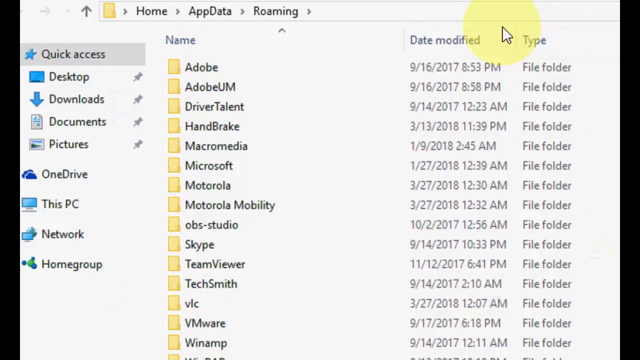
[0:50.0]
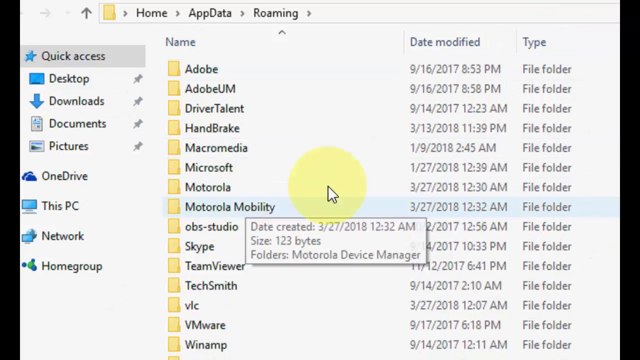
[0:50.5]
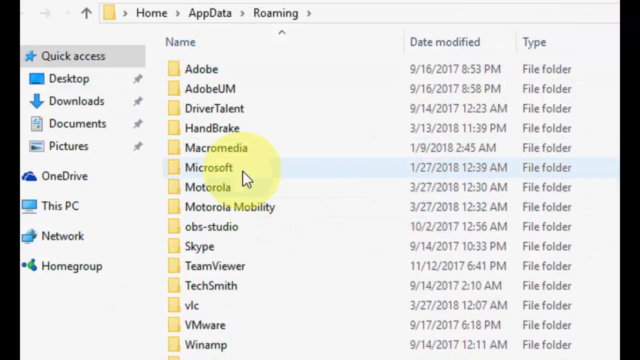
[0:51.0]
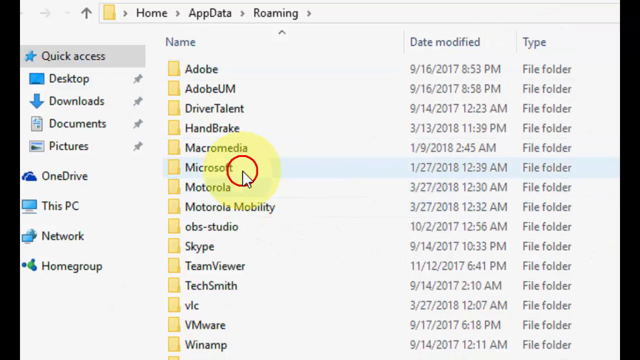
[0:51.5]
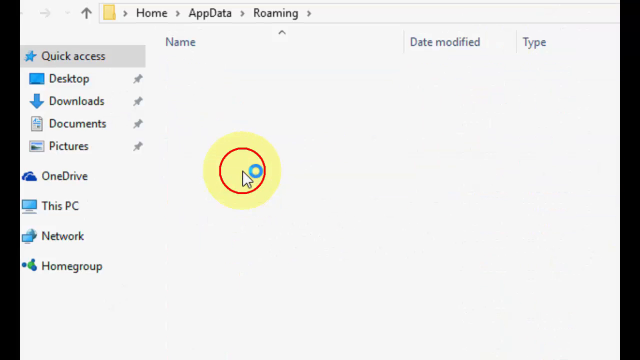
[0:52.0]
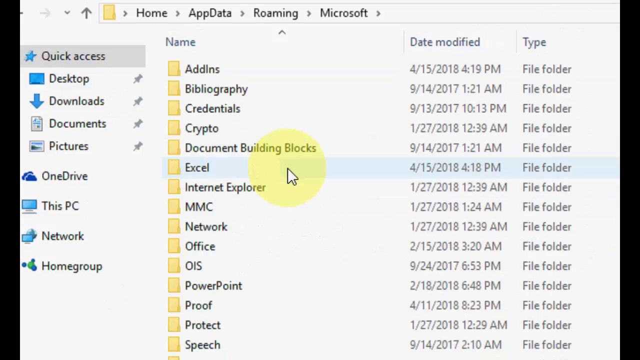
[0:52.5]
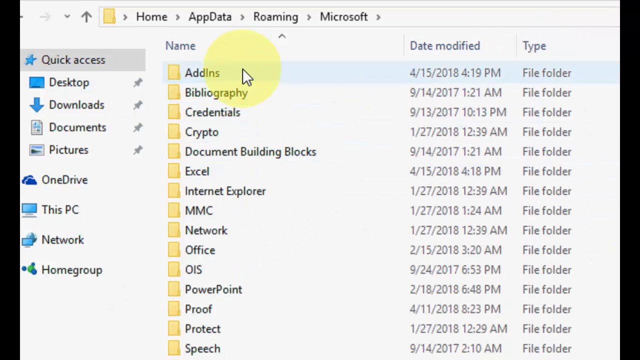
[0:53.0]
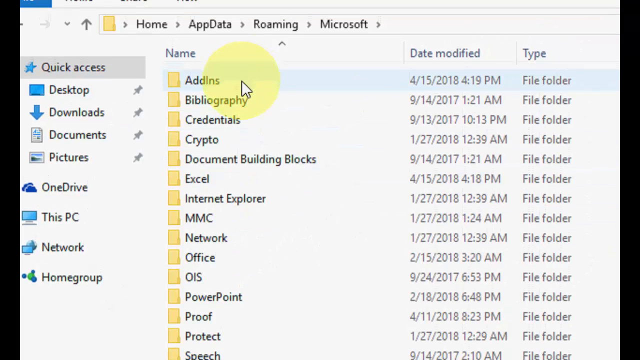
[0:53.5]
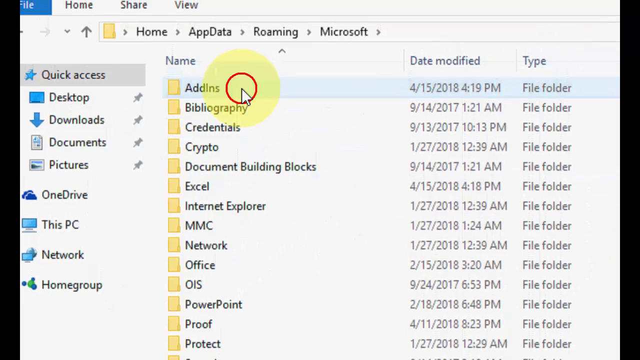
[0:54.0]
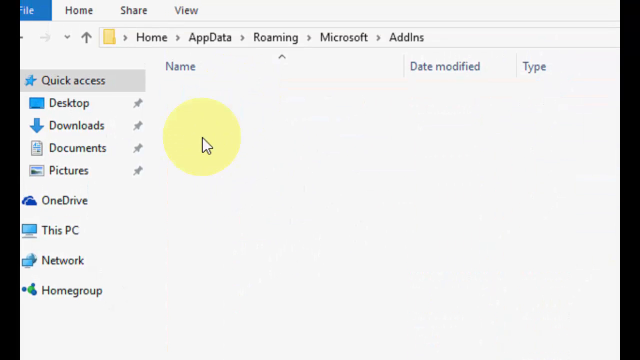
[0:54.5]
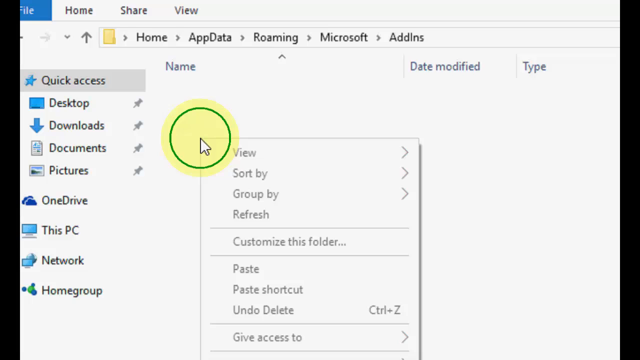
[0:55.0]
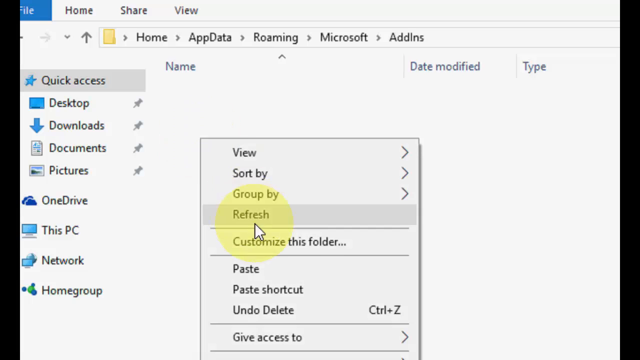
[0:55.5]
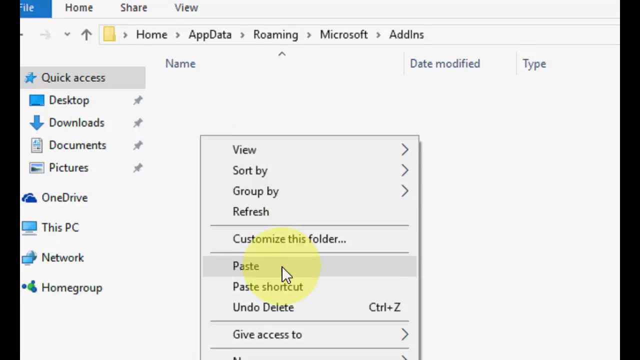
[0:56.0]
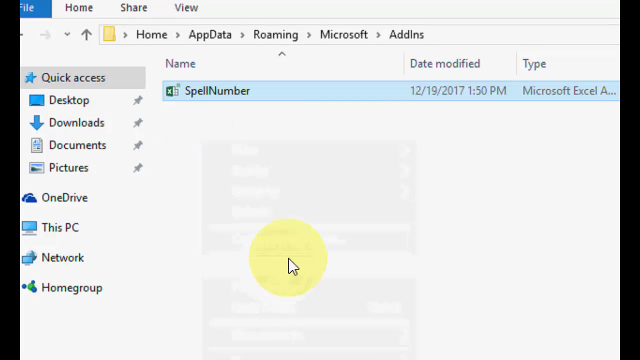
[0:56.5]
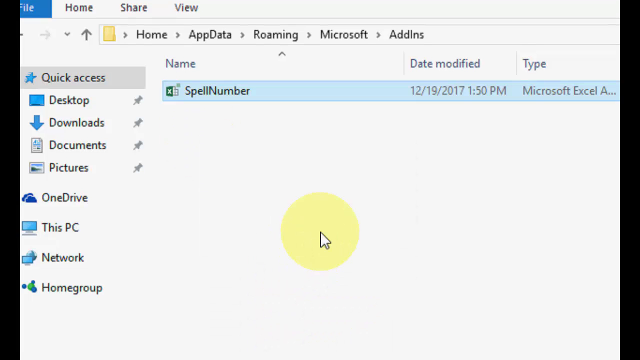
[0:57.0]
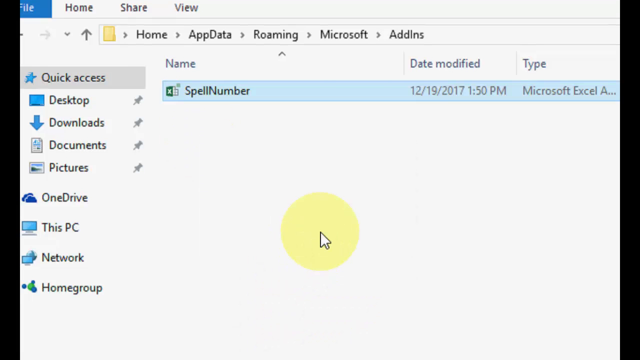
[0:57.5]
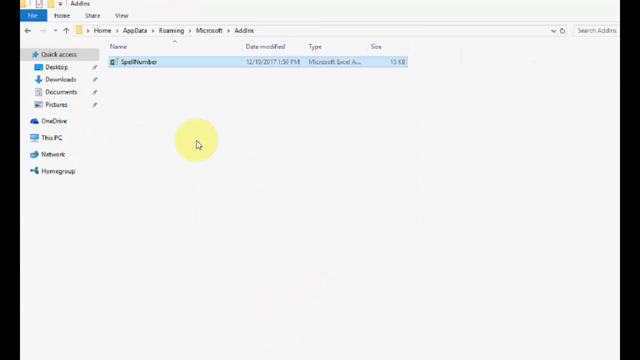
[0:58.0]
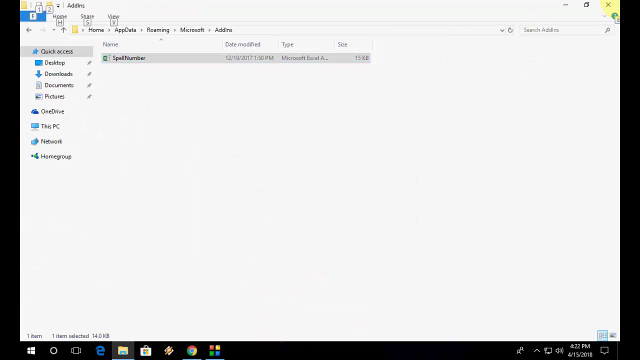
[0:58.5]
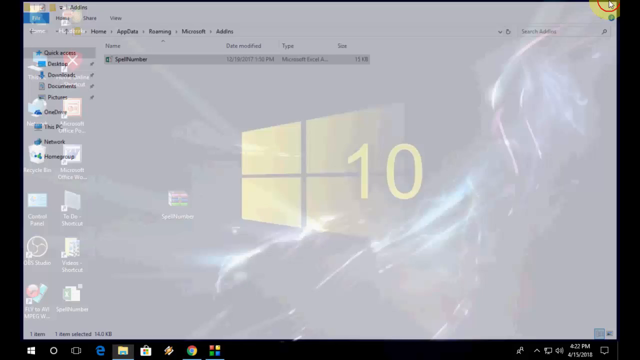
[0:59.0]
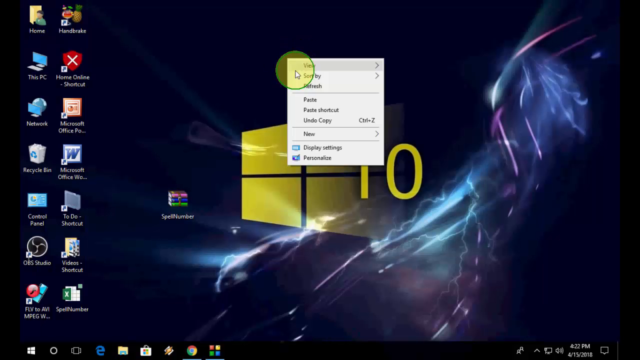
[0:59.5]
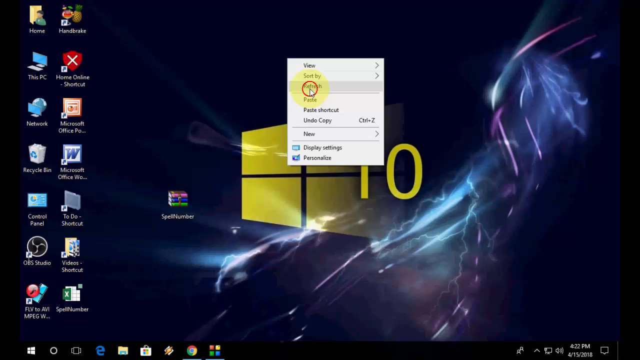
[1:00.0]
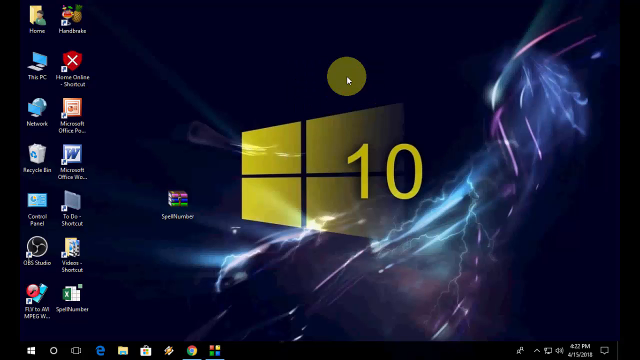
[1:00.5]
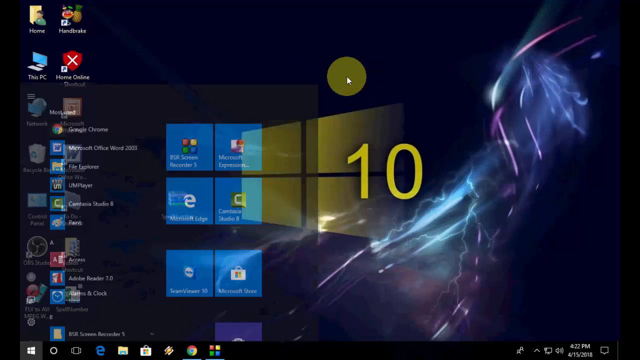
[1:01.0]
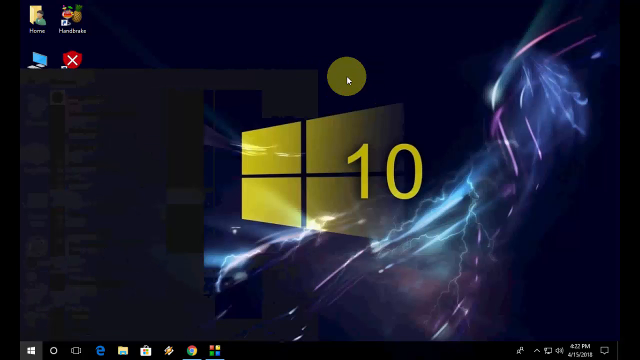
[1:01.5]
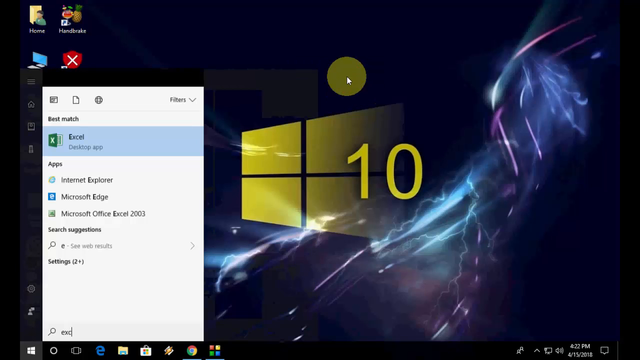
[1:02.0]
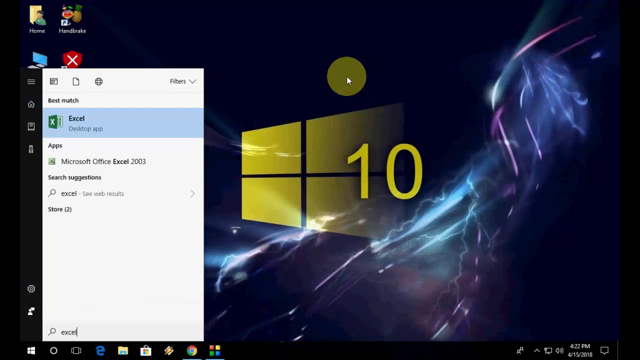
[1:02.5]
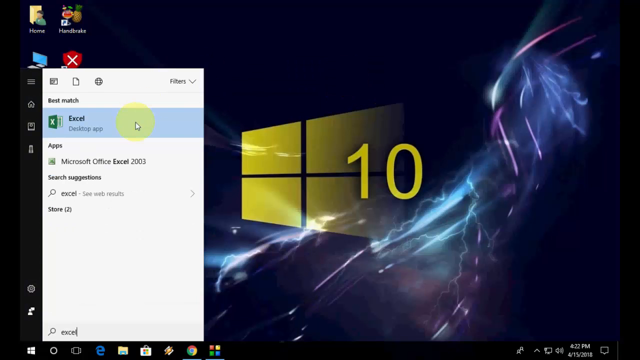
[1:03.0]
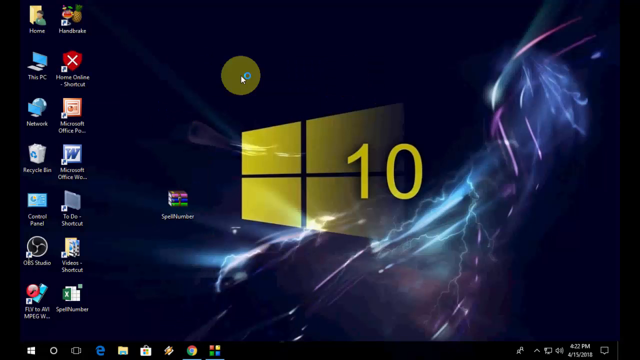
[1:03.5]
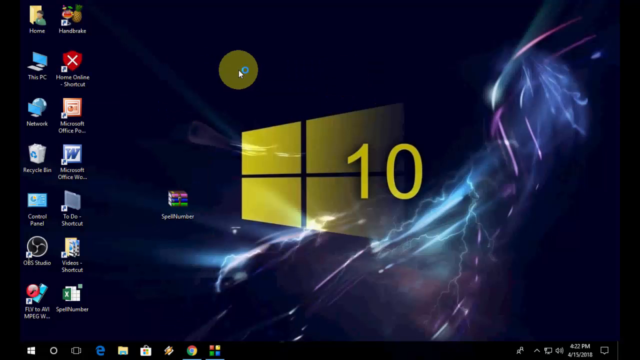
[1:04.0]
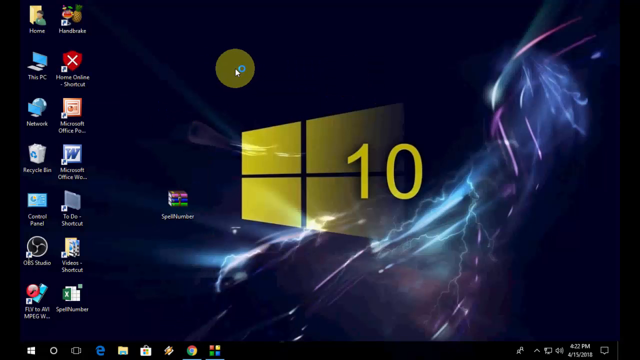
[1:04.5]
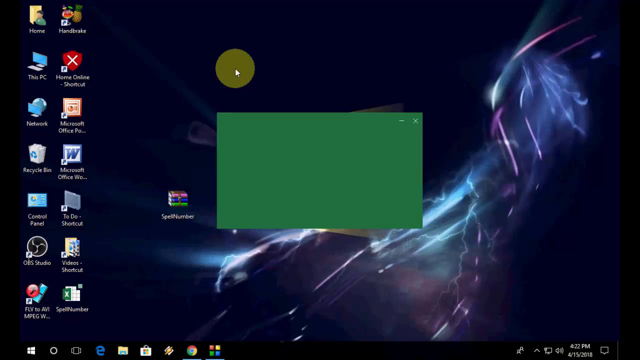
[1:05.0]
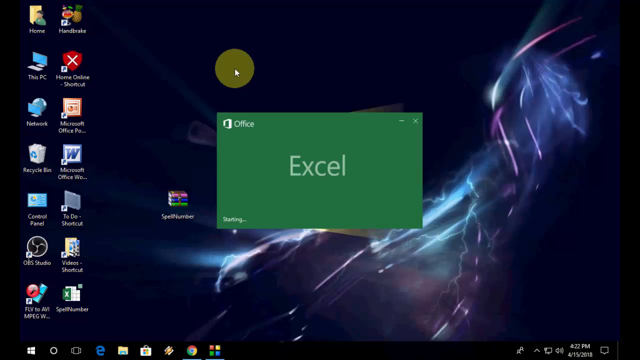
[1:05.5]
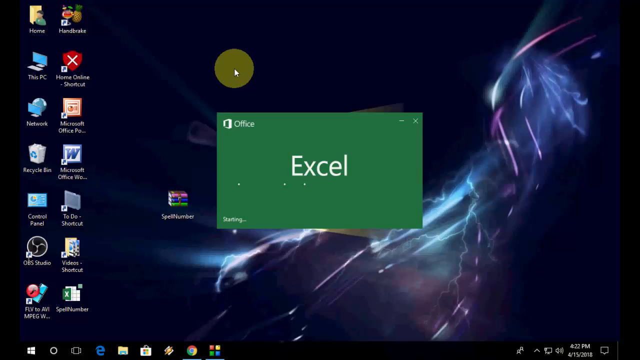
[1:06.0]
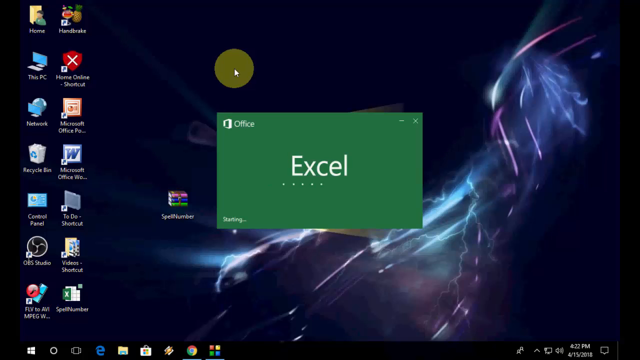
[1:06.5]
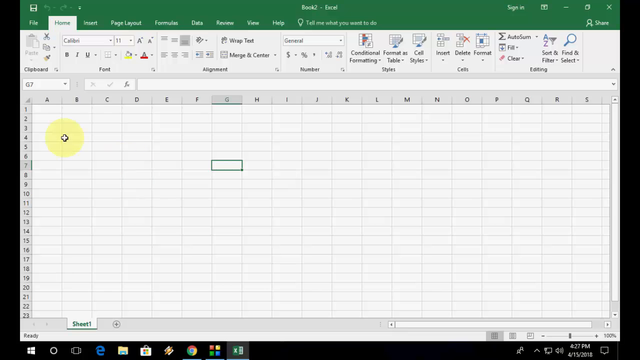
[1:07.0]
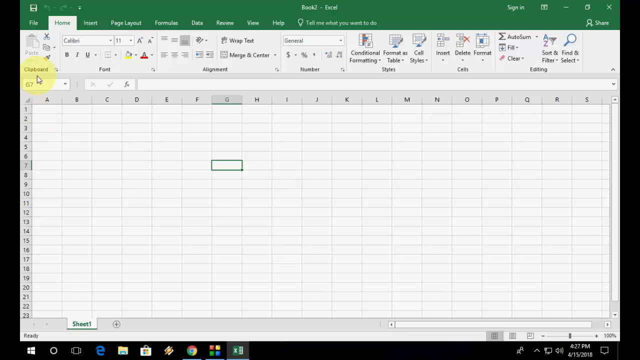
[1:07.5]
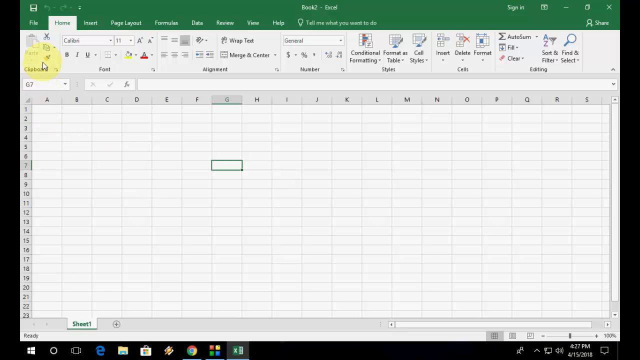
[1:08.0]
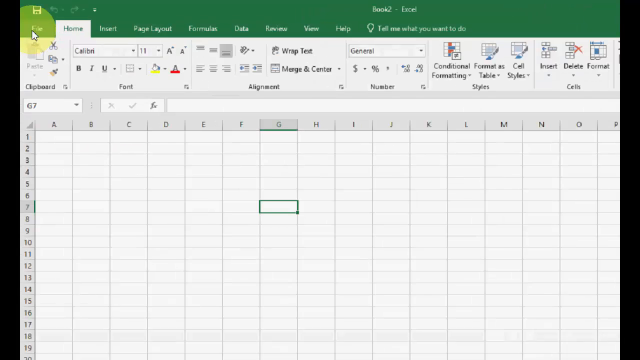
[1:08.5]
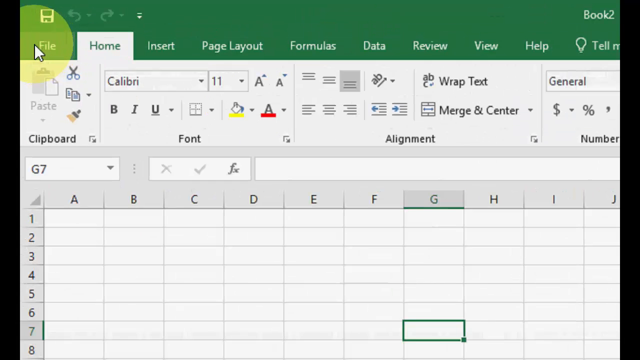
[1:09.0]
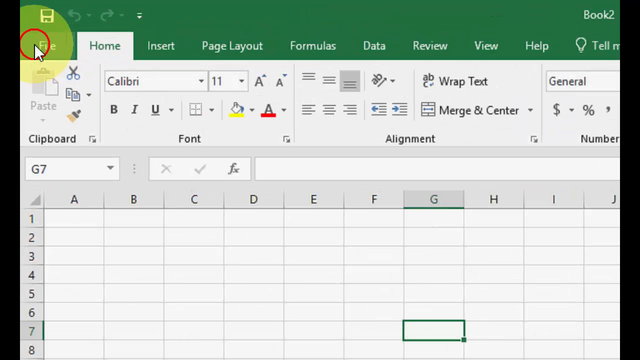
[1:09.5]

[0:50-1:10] Windows Explorer, a list of files, is on the right side, and the cursor highlights some of them. A red circle and a red line appear, and the files all disappear. The view scrolls to the very top file and add-ins is clicked. A pop-up window shows up with a yellow circle, inside it a red circle, and inside that a blue circle. Refresh is clicked, then paste, and a Spellbinder spreadsheet appears in the window. The view zooms out to full screen. The window is clicked out of, the cursor moves to the center of the screen, right-clicks and chooses Refresh. The Start menu shows up, then a window pops up with the Excel desktop app at the top, and the window expands. Excel is clicked and opens, with three dots moving to show that it is loading, and then an Excel spreadsheet opens full screen. The cursor is on the upper left side and points to the clipboard, the paste, and the File tab.